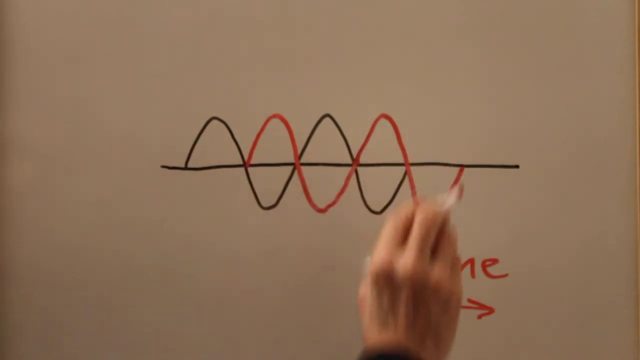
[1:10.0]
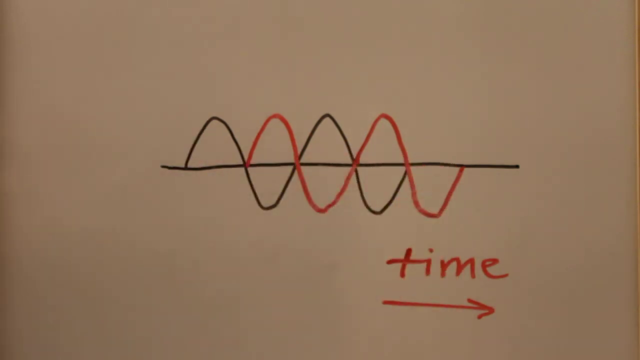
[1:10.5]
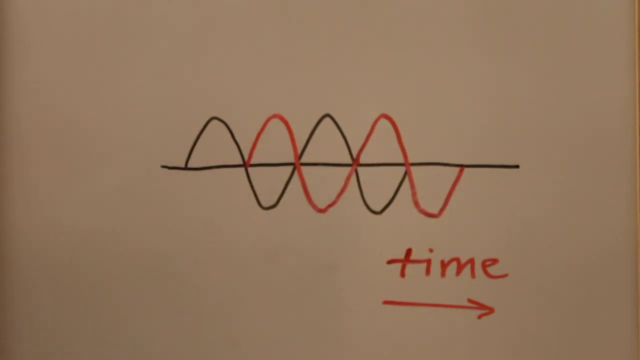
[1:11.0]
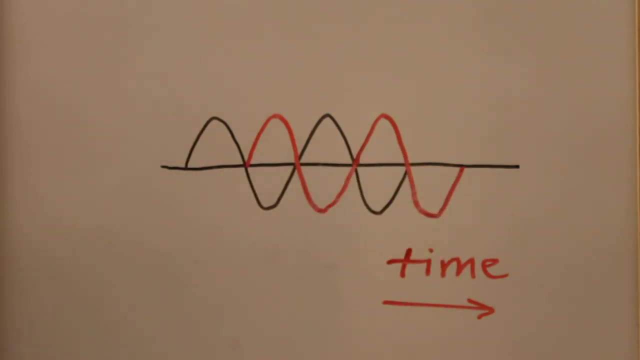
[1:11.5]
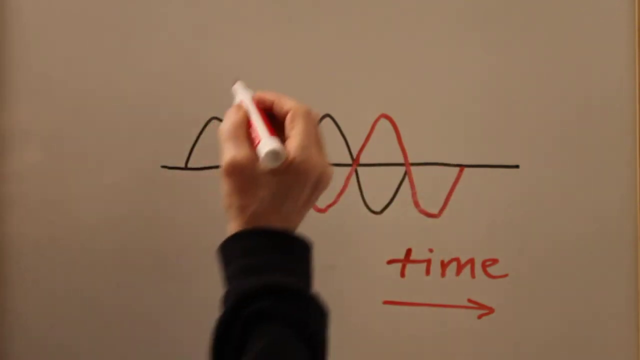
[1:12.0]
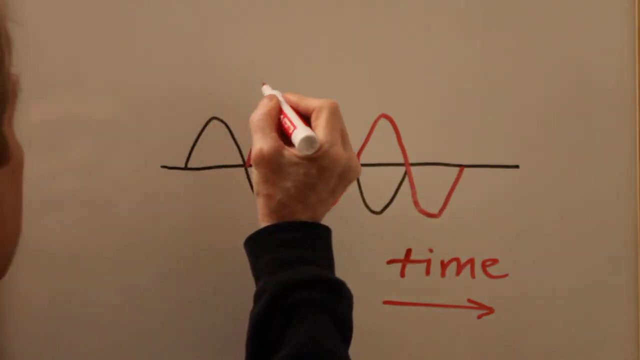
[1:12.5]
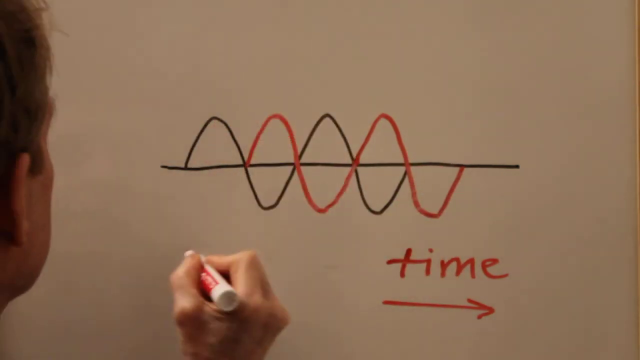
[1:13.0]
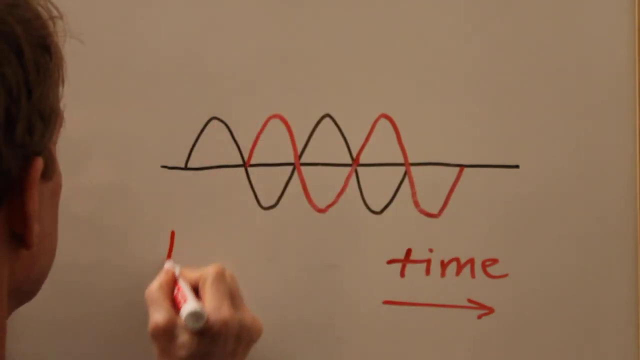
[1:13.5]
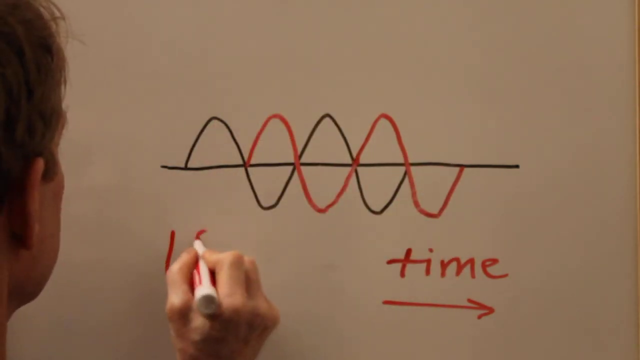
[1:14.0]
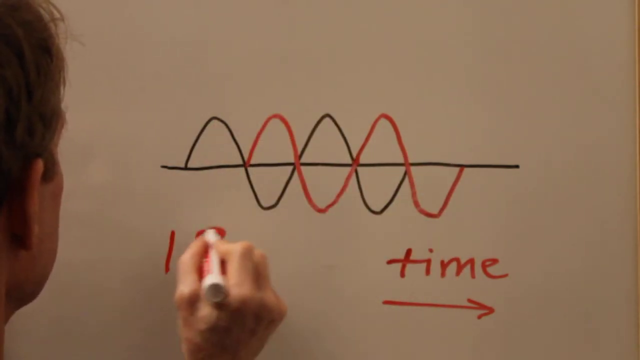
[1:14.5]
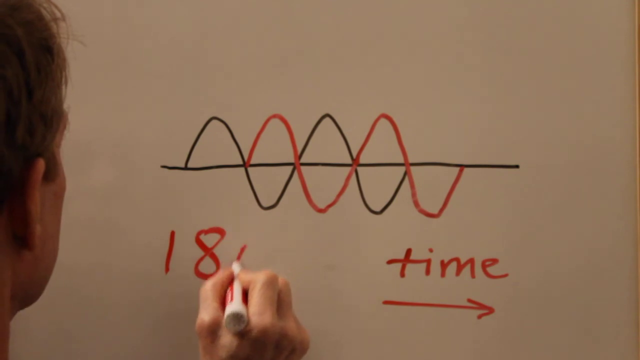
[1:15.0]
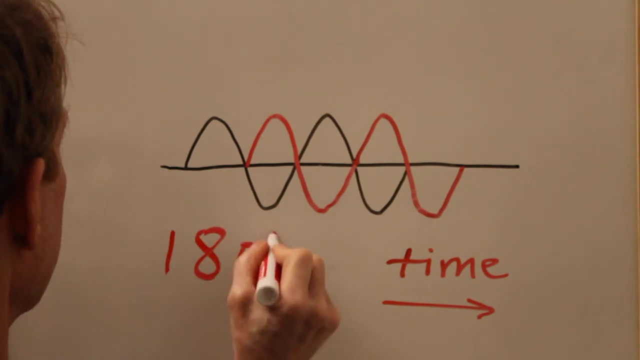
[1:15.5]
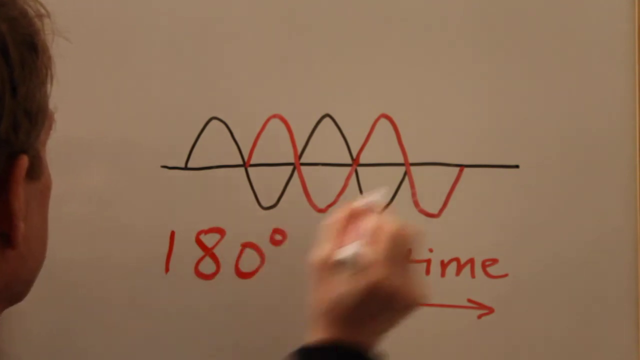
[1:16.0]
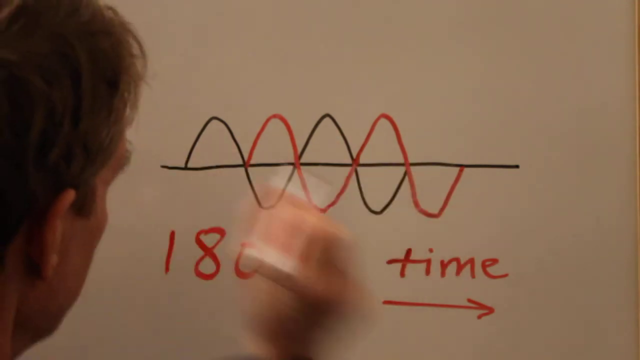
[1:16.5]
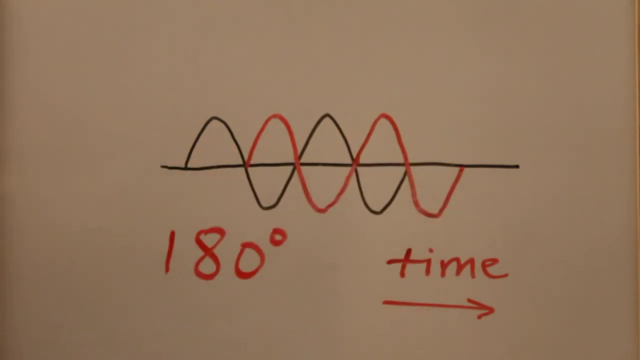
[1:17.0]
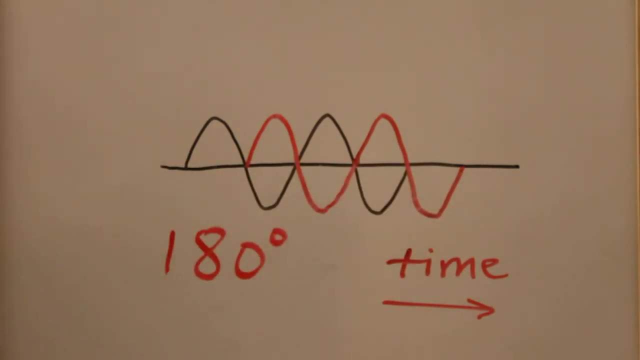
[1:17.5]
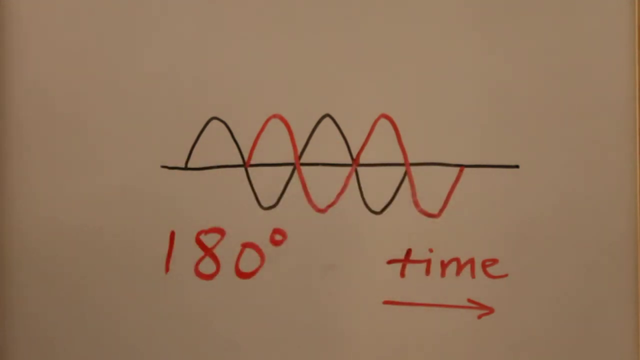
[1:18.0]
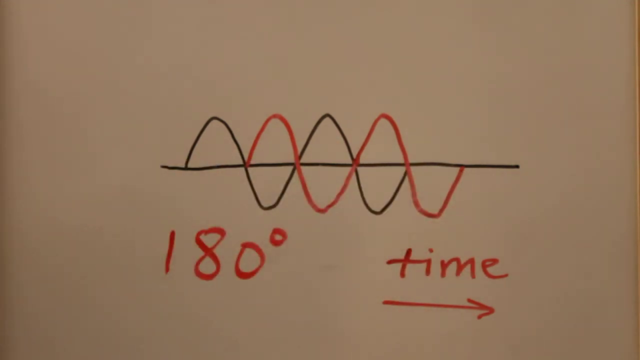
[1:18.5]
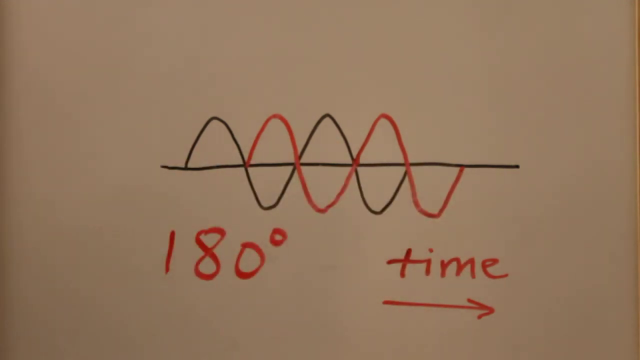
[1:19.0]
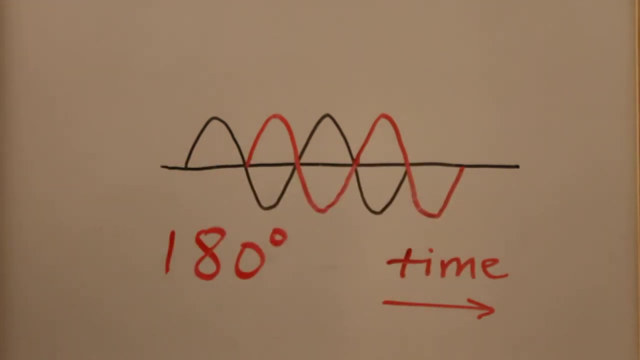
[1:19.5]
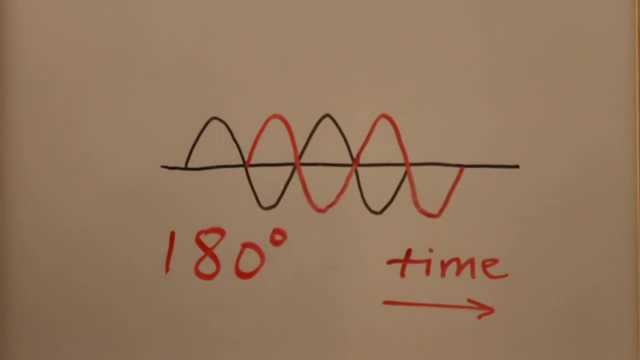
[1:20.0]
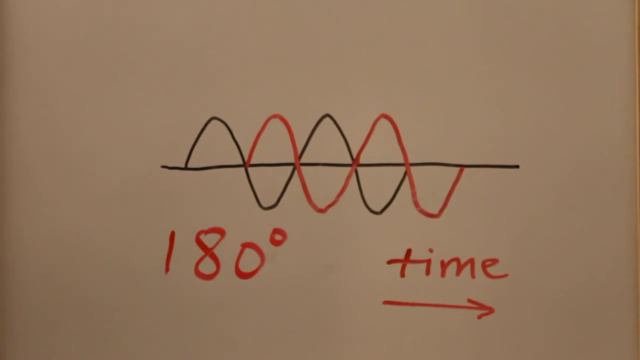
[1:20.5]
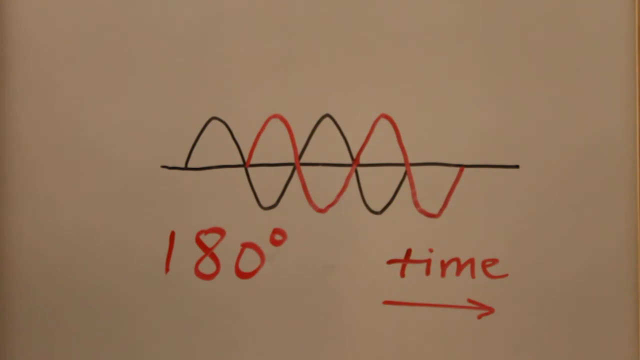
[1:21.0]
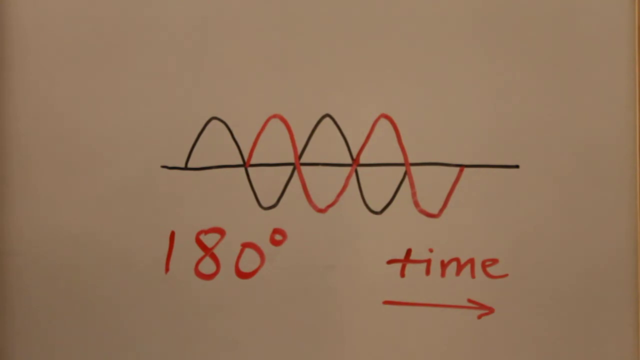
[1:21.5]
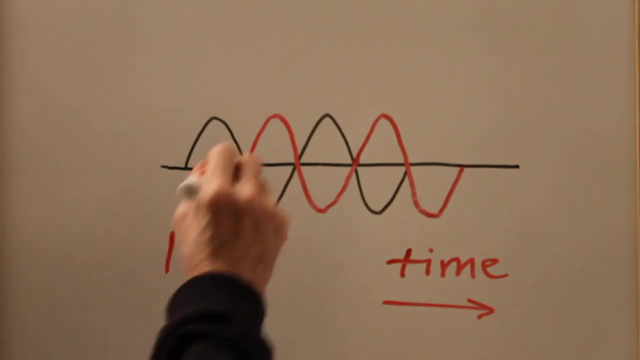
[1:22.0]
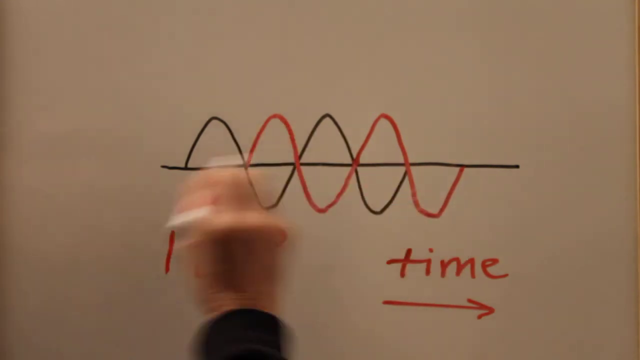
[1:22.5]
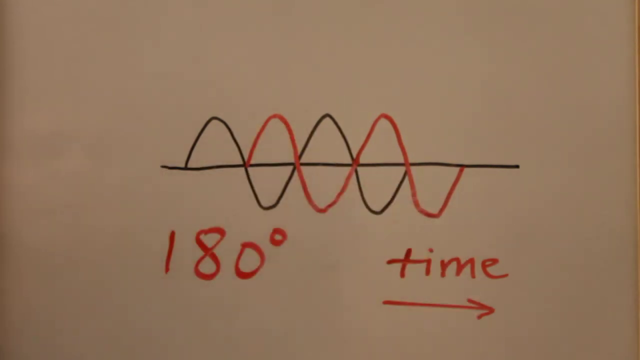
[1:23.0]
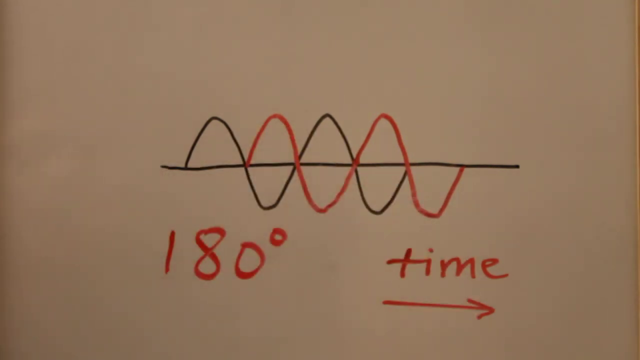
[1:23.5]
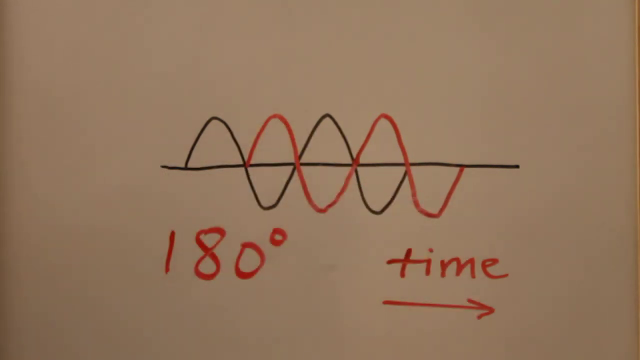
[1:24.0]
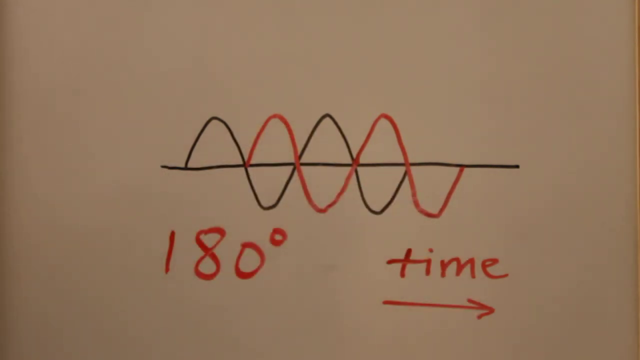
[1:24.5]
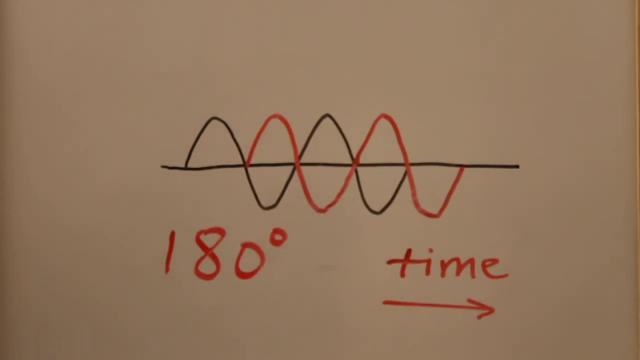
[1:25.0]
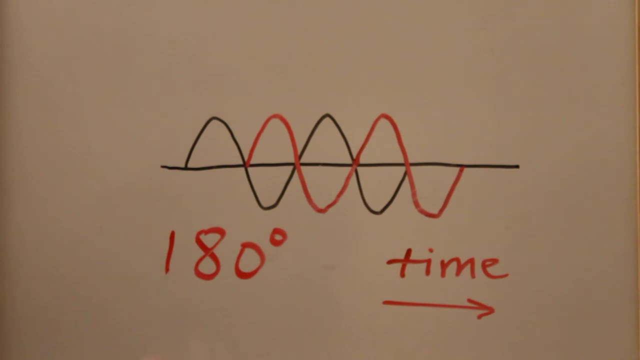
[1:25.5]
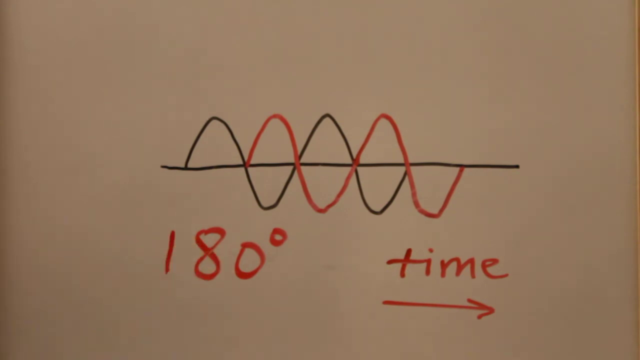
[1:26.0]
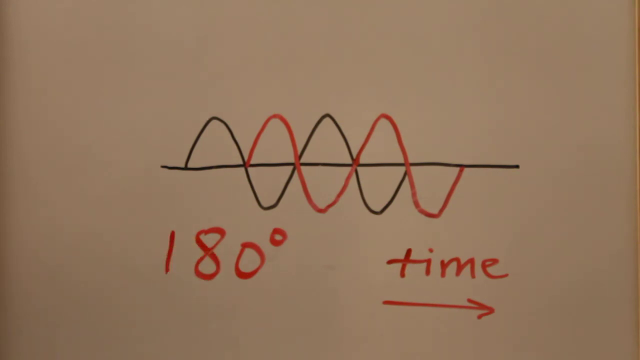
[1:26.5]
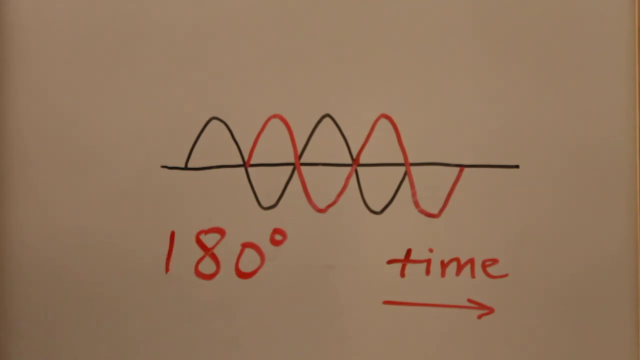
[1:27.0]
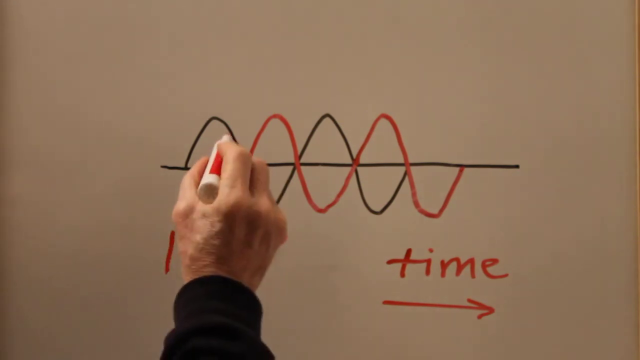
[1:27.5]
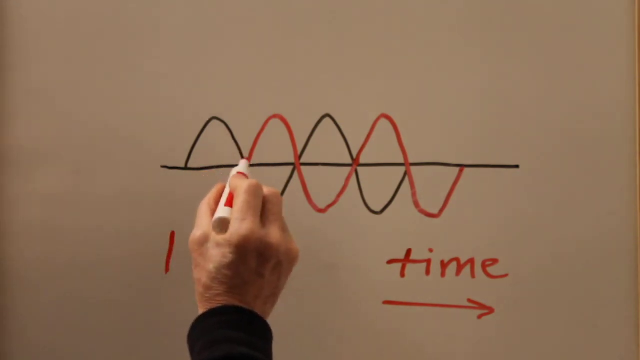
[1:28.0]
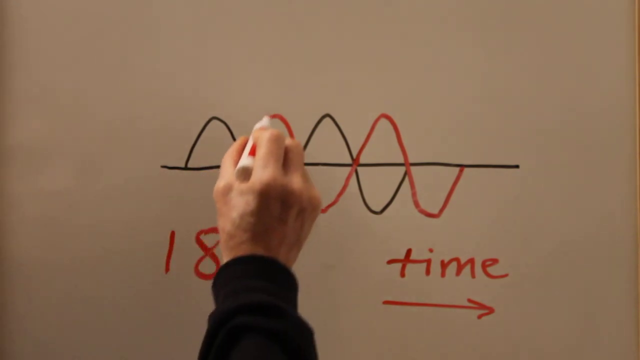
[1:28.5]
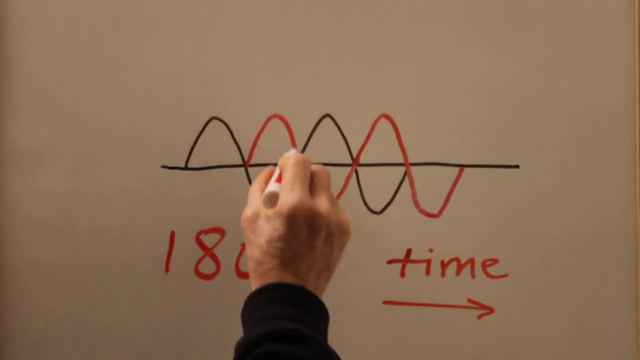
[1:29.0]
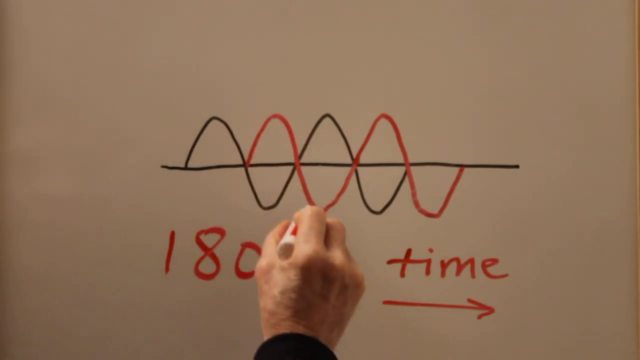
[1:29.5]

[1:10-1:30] His hand comes back up and writes "180°" underneath the curved lines, with a tiny circle at the upper right of the zero to mark degrees. Part of his head is visible while he writes it. He then gestures a little to the line, sweeping from right to left, and goes out of frame. He comes back, waves his pen over the illustration, and goes off again. His arm comes up and points to the 180, and then his hand, without drawing, follows the up and down of the black and red lines, apparently as he talks about it. His head is now out of frame, and mostly only his hand is seen as he gestures.